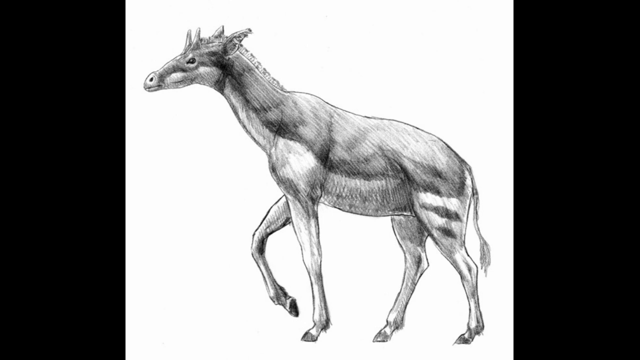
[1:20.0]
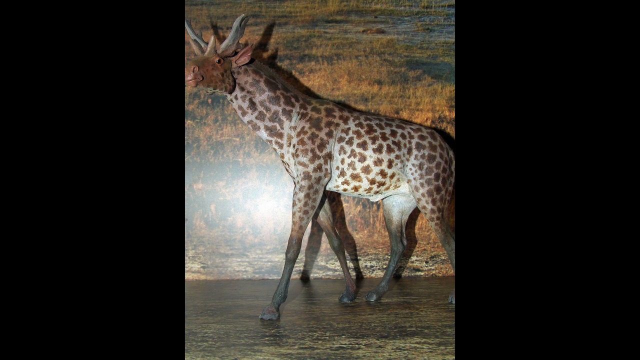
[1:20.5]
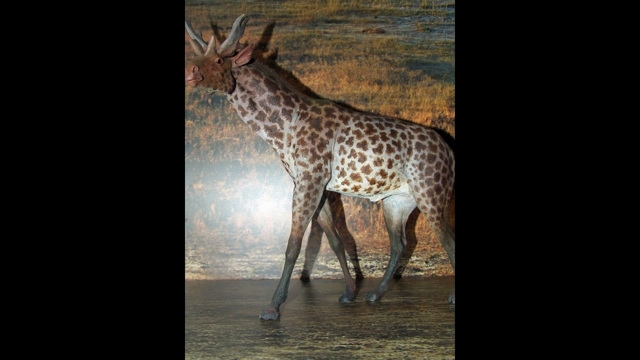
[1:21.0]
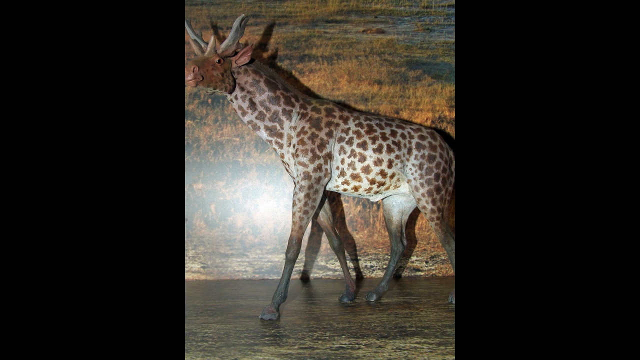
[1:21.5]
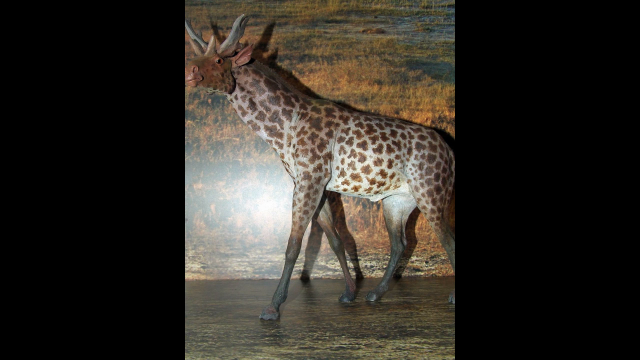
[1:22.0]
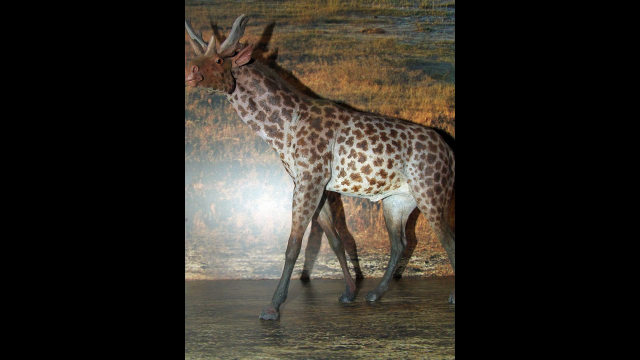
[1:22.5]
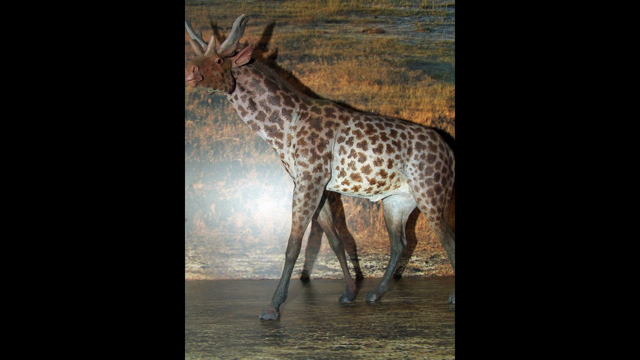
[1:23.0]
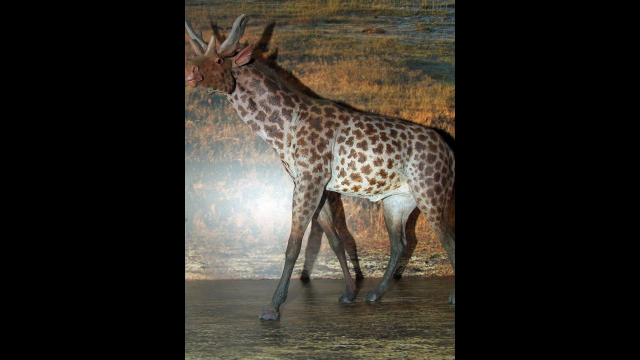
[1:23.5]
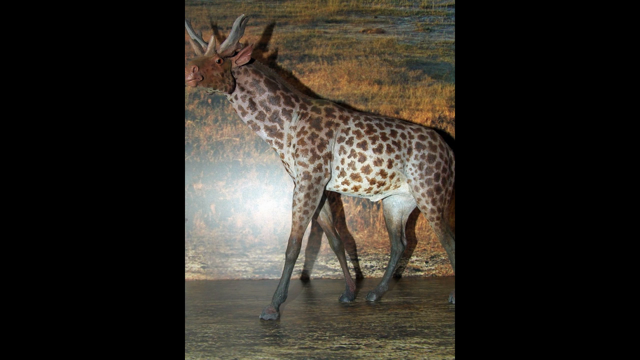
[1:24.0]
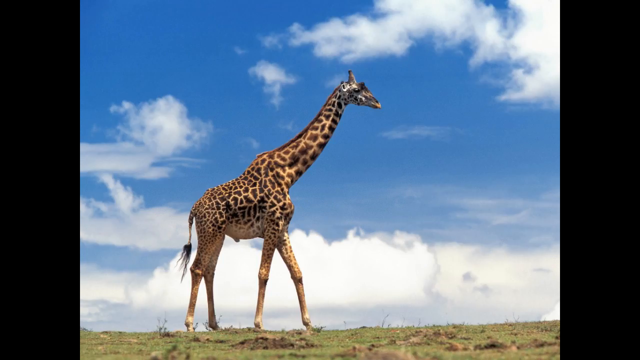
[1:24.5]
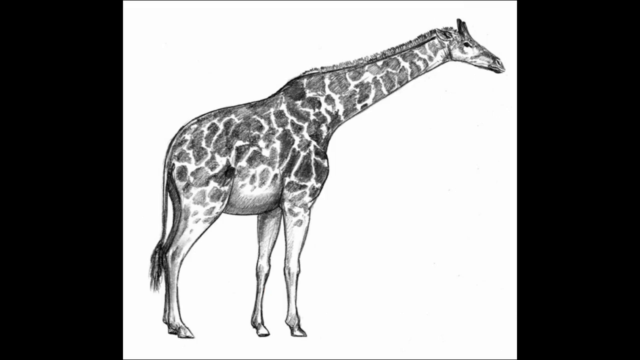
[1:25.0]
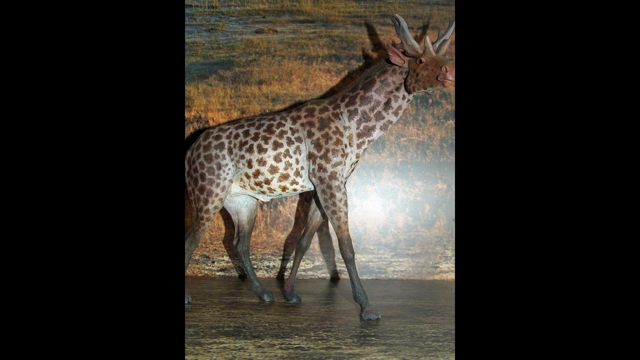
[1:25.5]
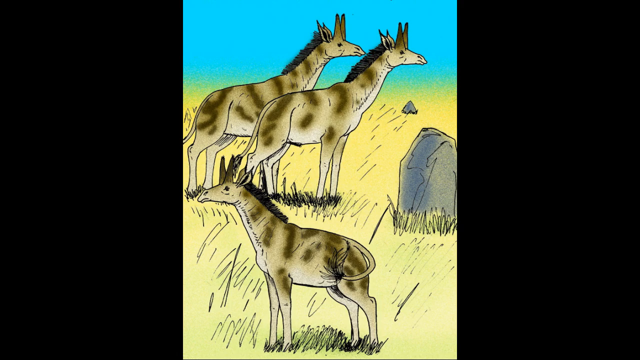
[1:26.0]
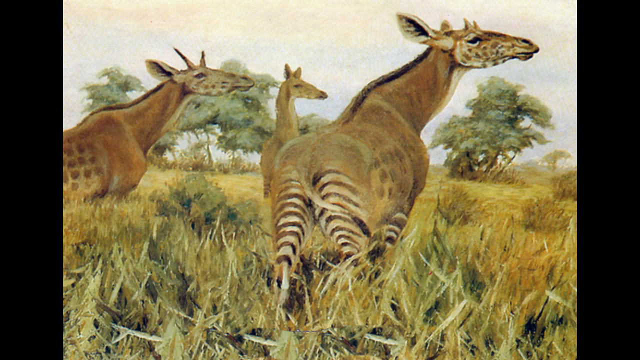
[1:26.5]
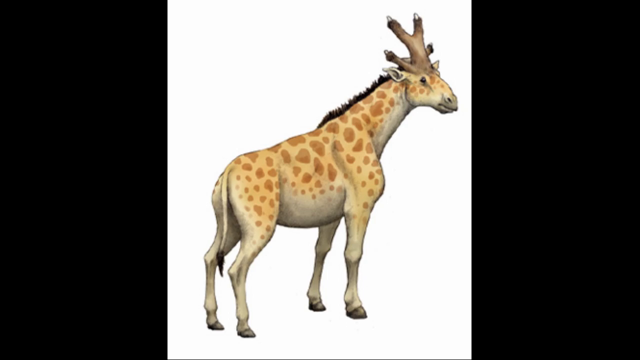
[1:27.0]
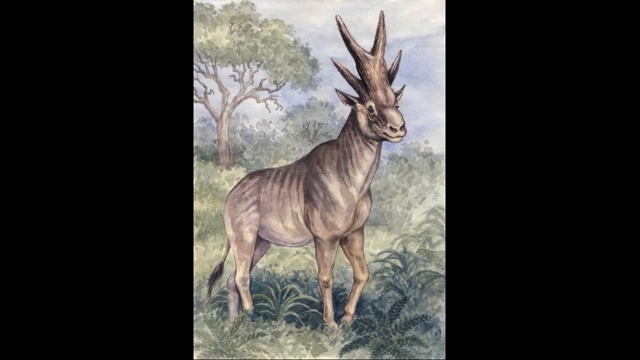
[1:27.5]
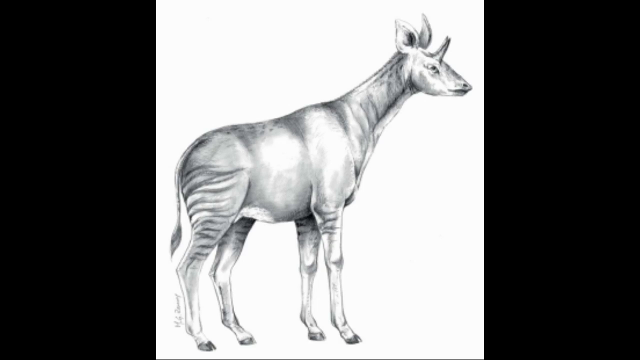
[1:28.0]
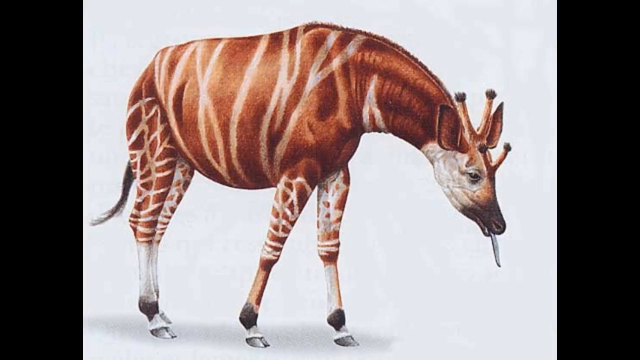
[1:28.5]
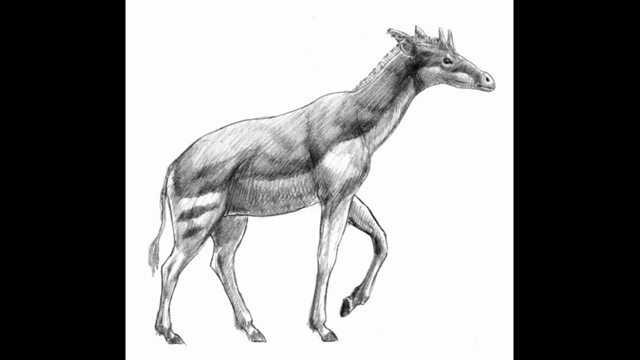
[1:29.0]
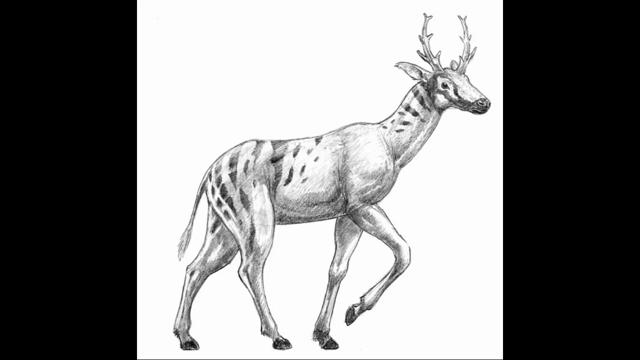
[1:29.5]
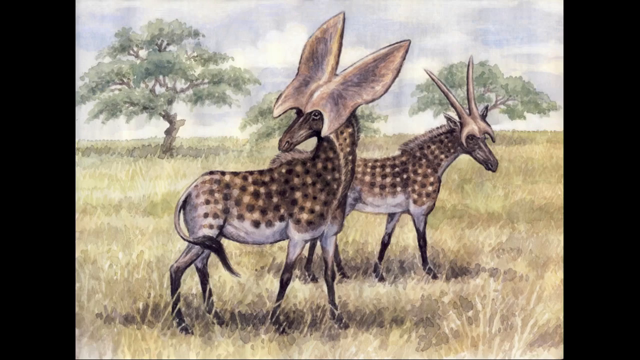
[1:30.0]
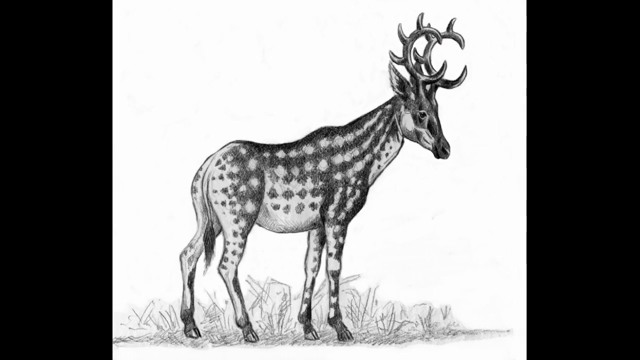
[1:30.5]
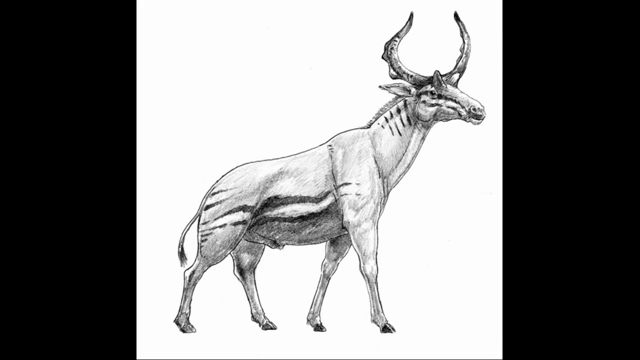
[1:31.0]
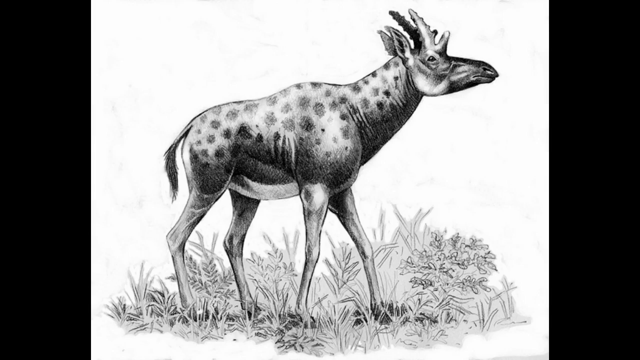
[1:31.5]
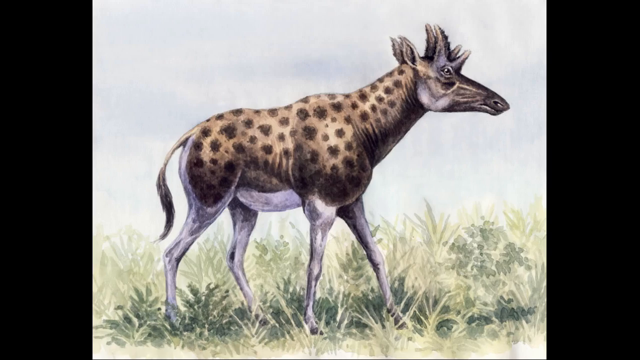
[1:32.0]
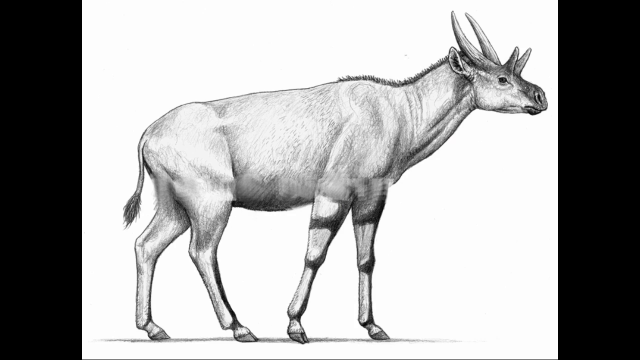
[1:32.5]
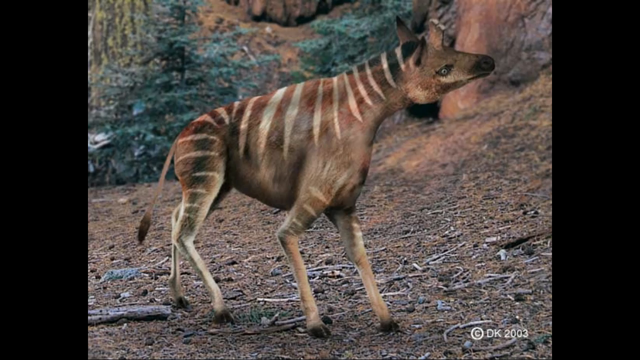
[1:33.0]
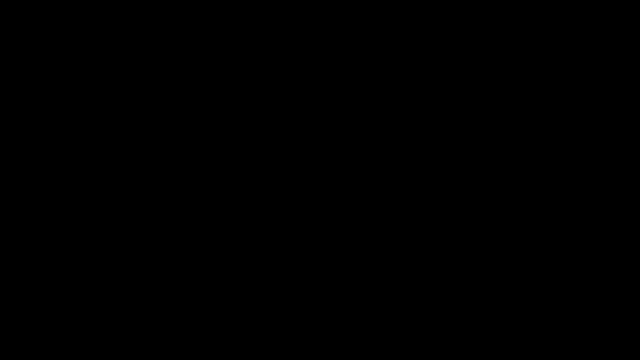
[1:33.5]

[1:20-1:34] The video appears to return to the original photo from the beginning, the ancient animal with giraffe spots and four horns on its head; it looks to be a very lifelike model built for the museum. The previously seen artist's renditions of the giraffes then appear one after another, fairly fast. They look to be ancestors of the giraffe. Many are black and white and done in pencil, some are done in colored pencils, and some are computer-generated.